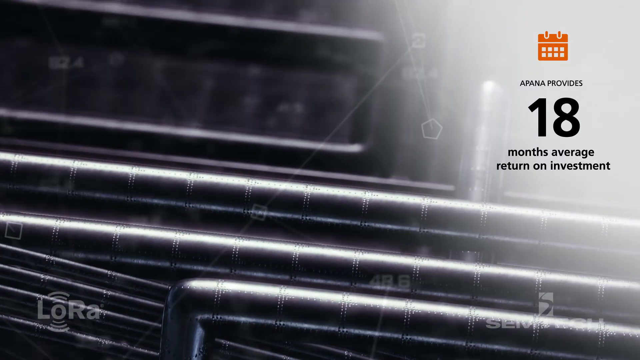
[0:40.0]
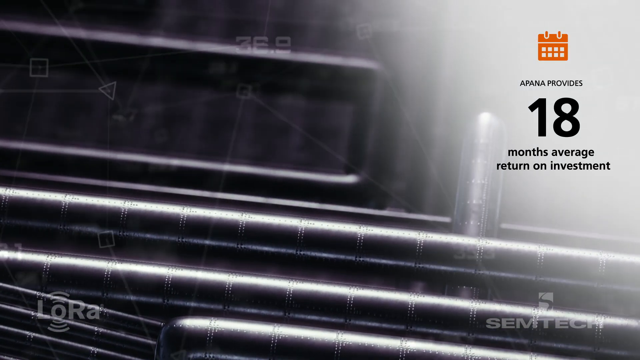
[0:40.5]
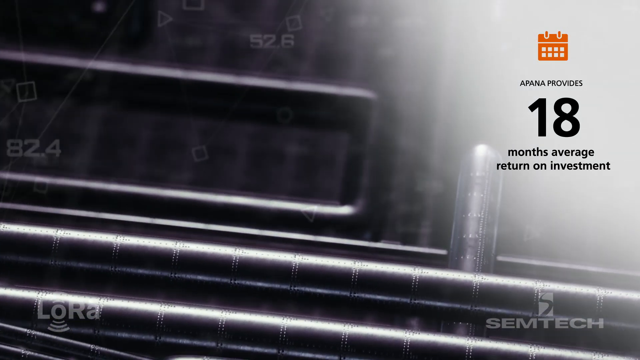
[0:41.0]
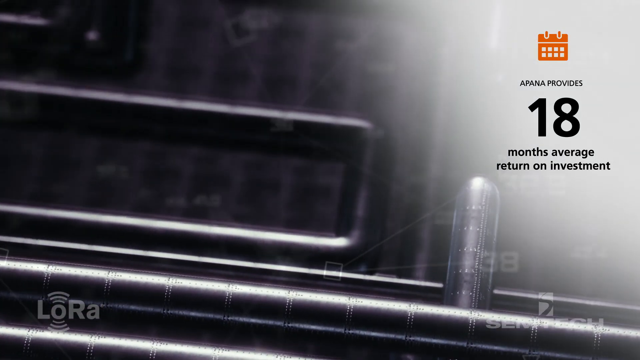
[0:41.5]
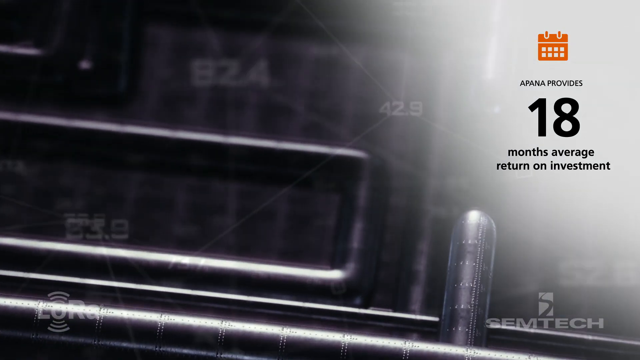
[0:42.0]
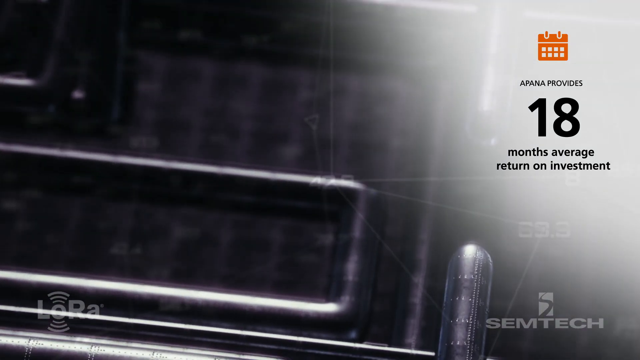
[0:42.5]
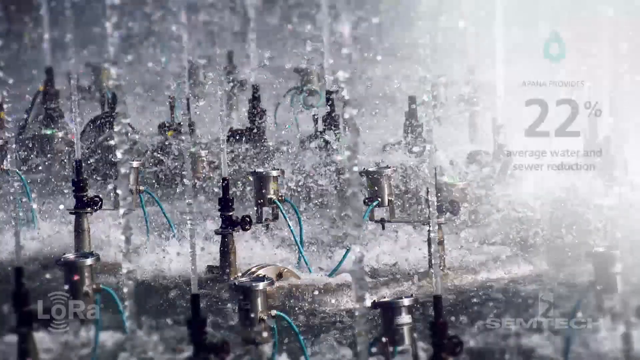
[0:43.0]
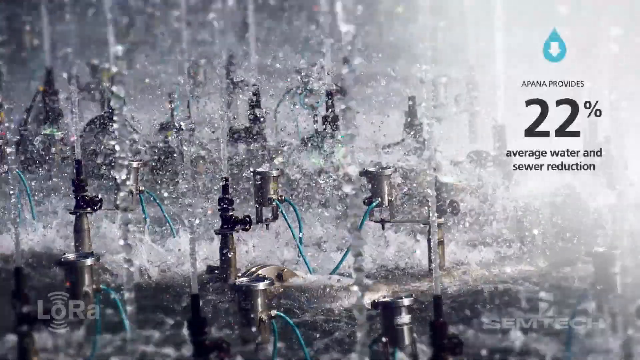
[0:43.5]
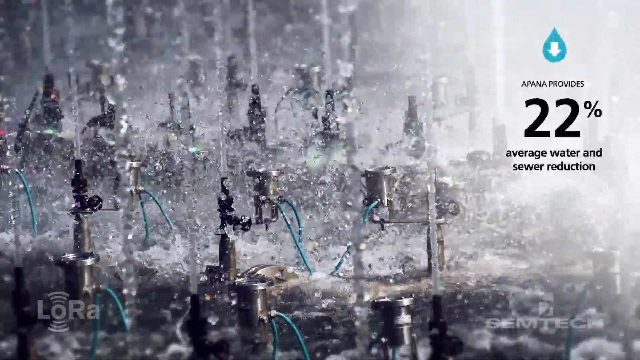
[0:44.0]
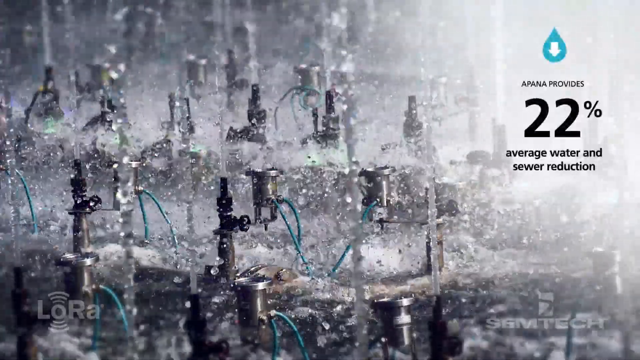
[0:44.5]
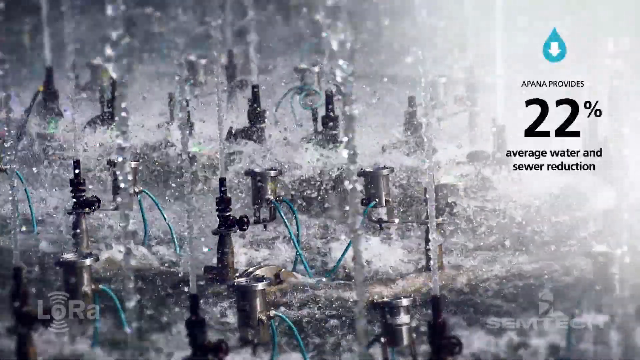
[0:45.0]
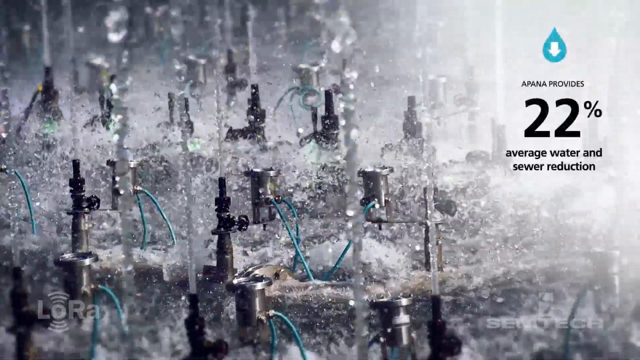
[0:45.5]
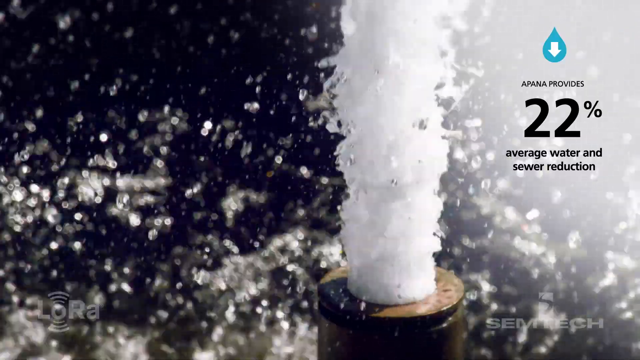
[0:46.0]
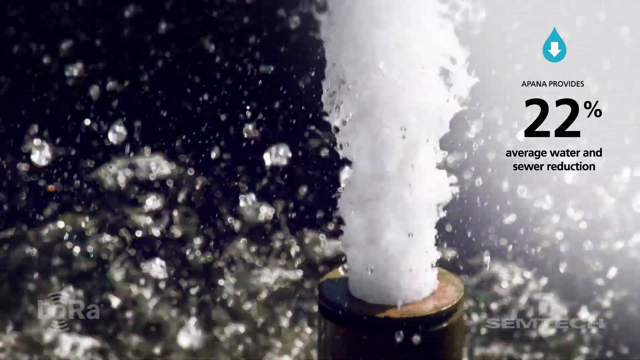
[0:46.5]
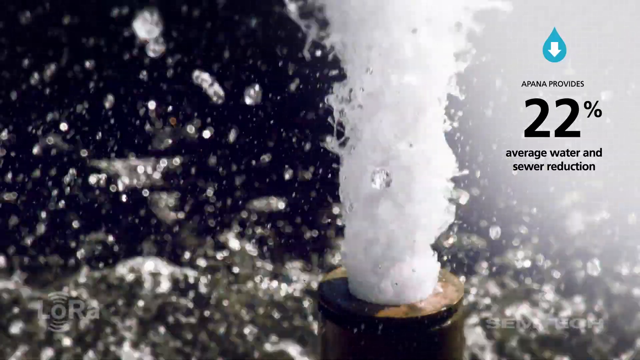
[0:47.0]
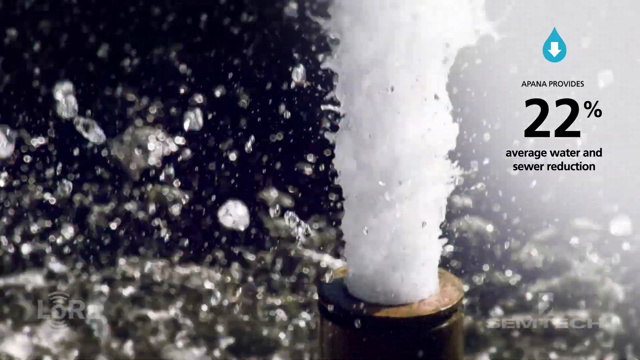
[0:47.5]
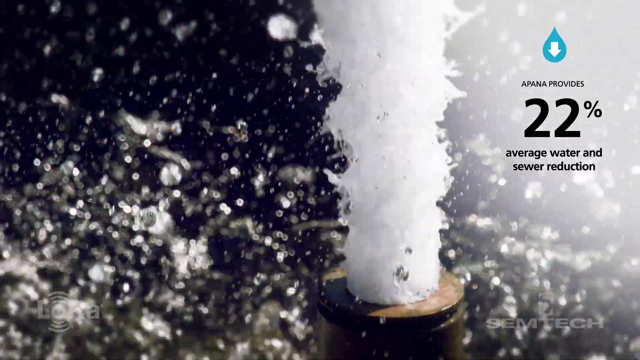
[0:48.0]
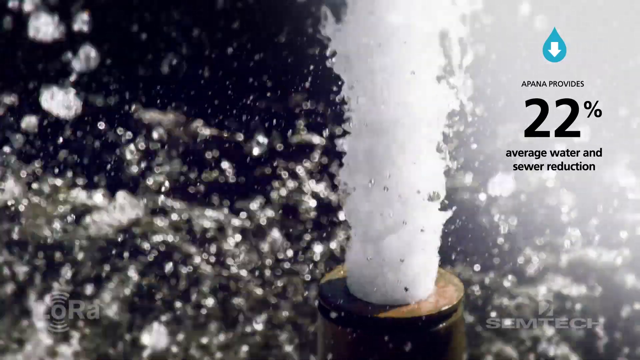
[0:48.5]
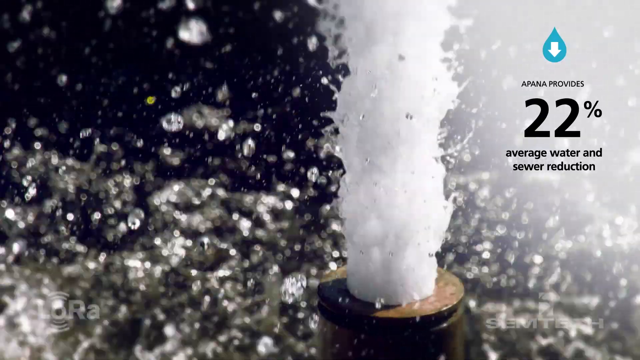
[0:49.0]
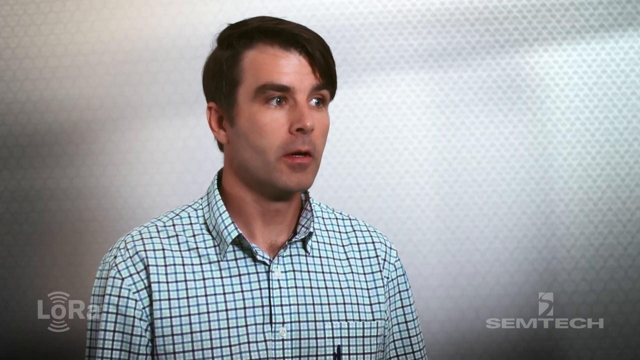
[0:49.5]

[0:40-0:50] The Apana commercial continues with text reading "Apana provides a 18-month average return on investments," followed by "APANA provides 22% average water and sewer reduction." As "sewer reduction" appears, a broken pipe is shown in the right front of the screen with water streaming out of its top.